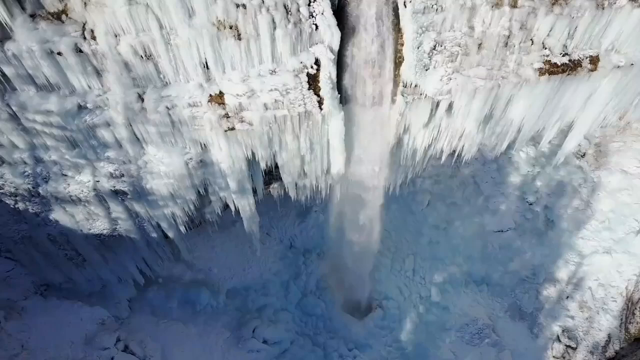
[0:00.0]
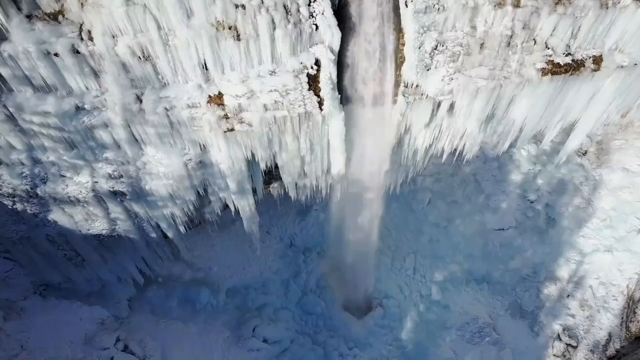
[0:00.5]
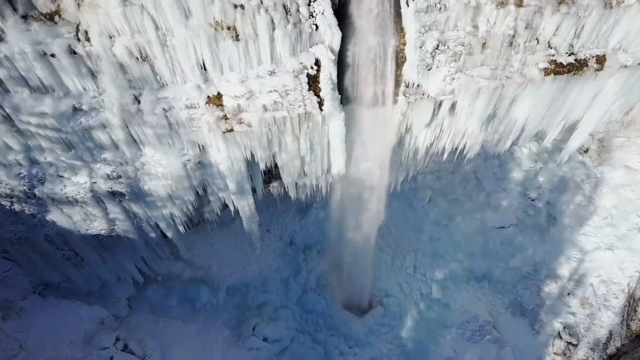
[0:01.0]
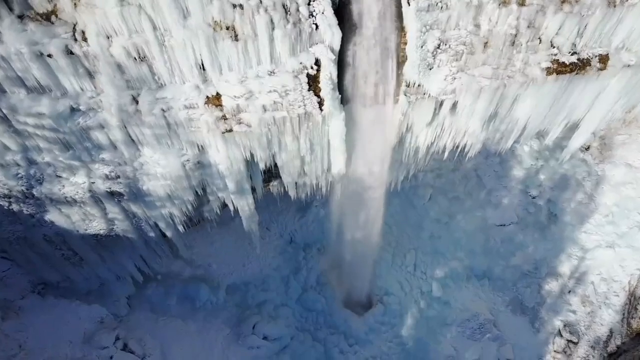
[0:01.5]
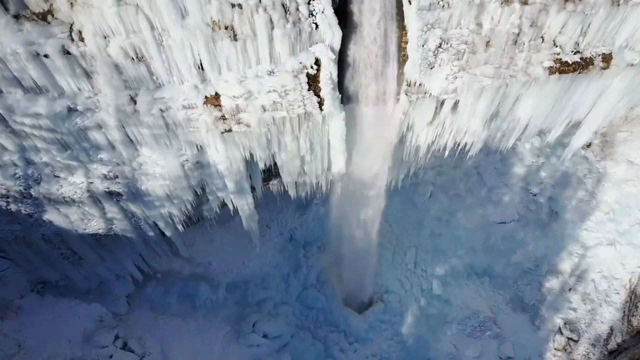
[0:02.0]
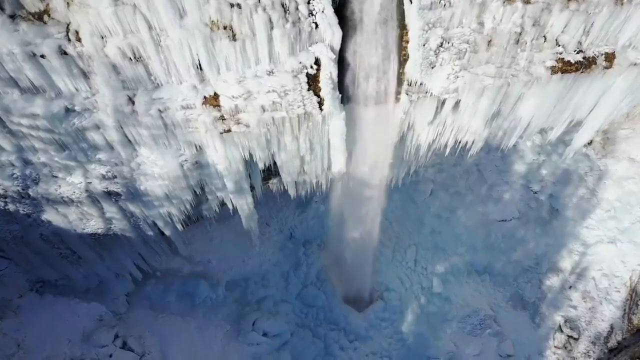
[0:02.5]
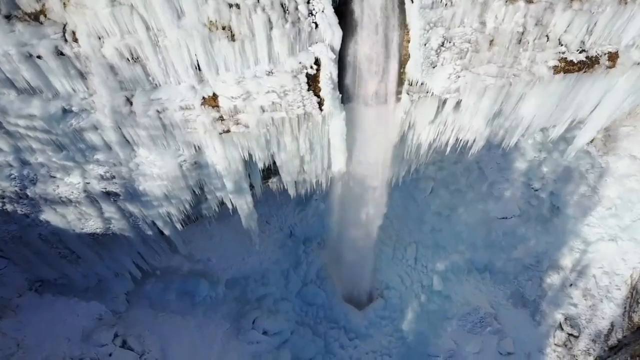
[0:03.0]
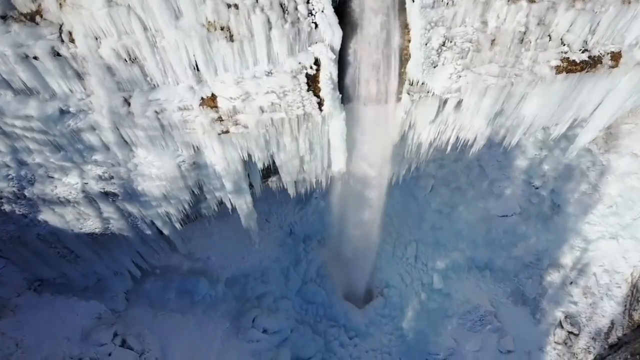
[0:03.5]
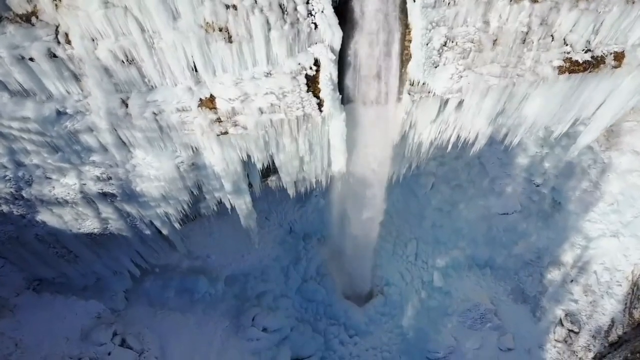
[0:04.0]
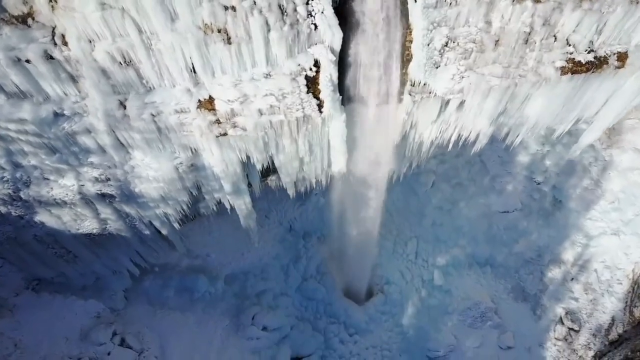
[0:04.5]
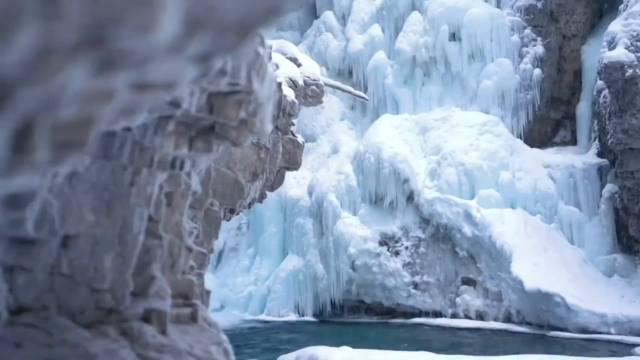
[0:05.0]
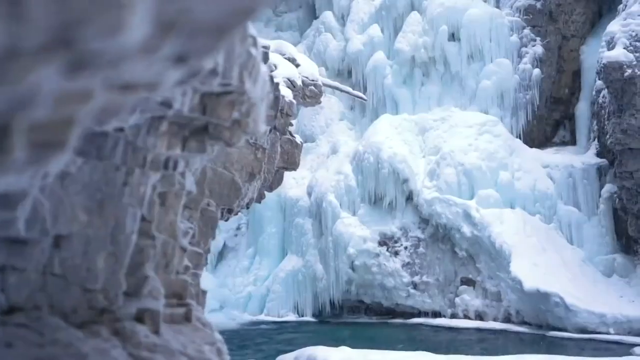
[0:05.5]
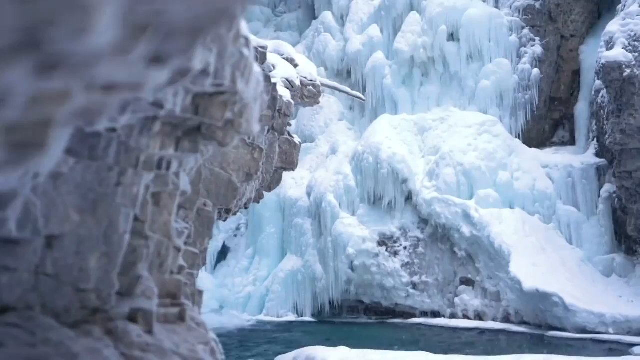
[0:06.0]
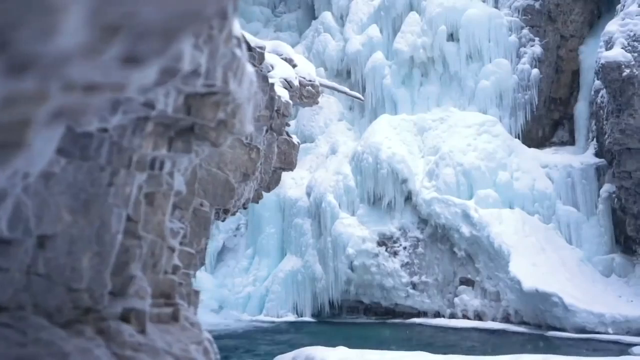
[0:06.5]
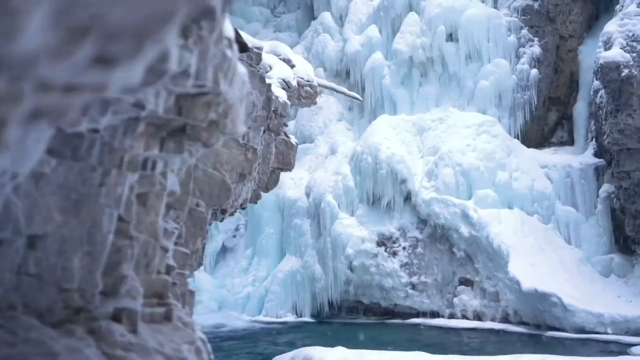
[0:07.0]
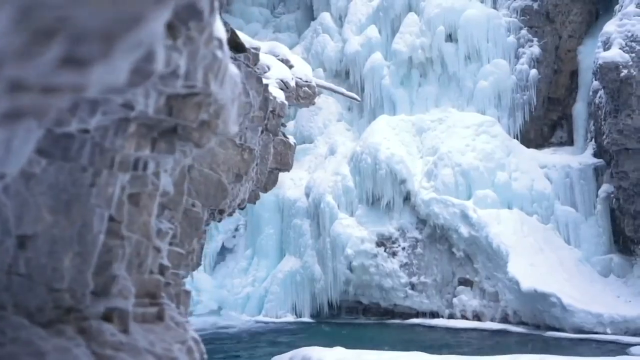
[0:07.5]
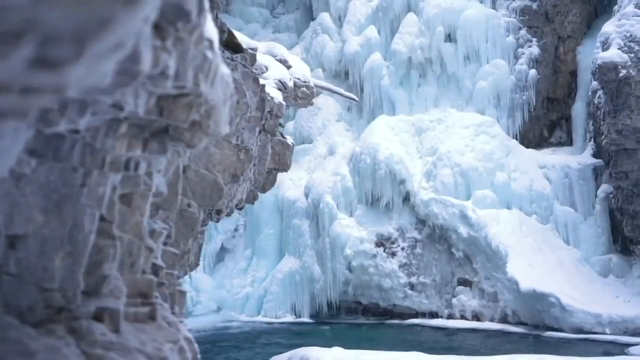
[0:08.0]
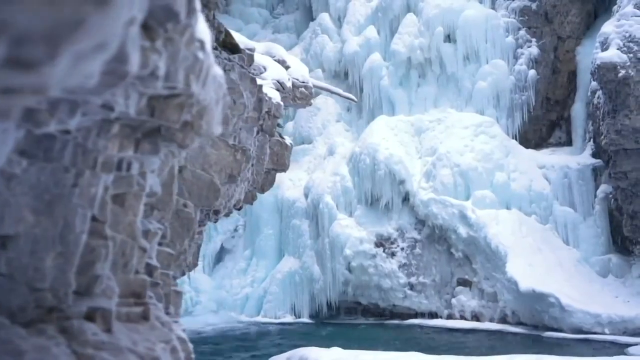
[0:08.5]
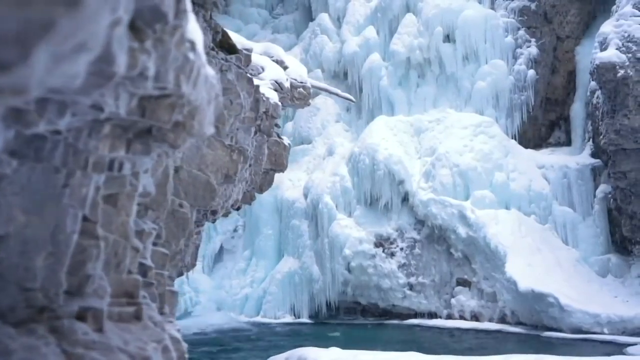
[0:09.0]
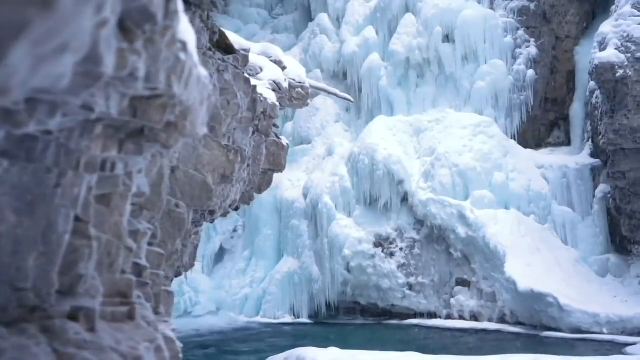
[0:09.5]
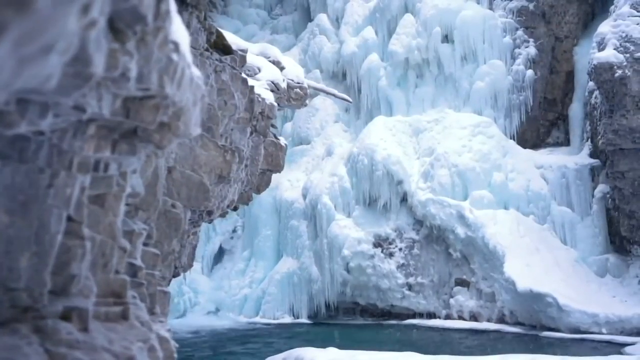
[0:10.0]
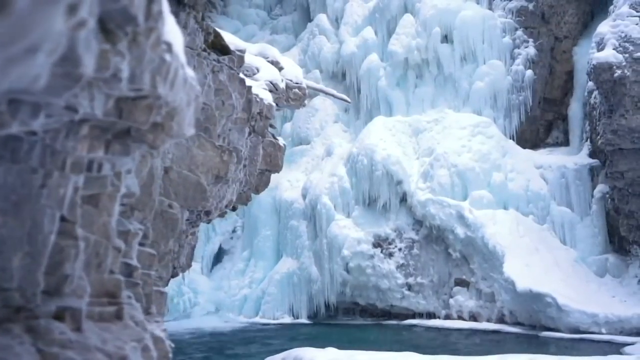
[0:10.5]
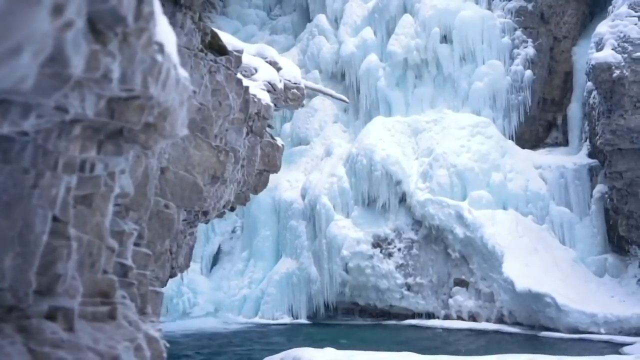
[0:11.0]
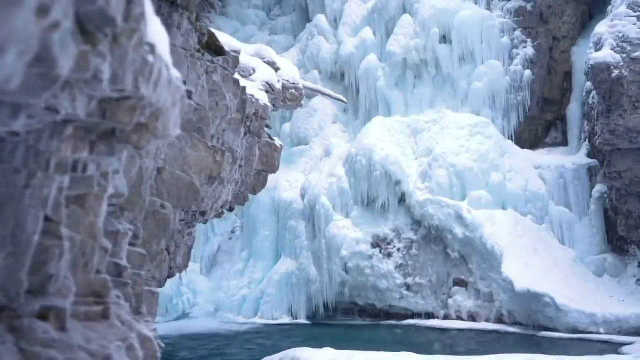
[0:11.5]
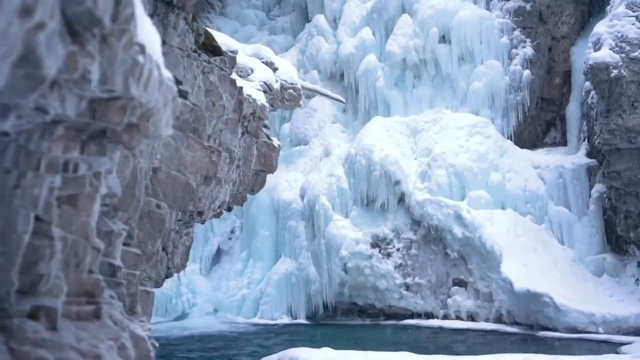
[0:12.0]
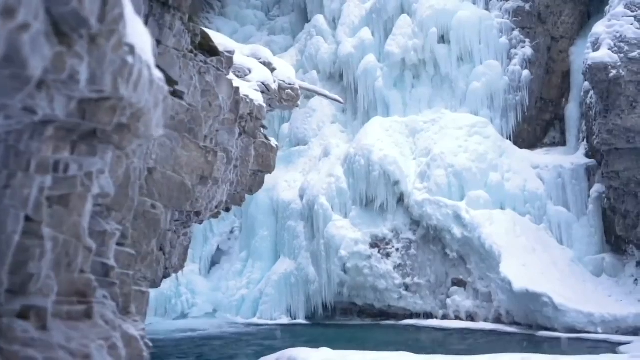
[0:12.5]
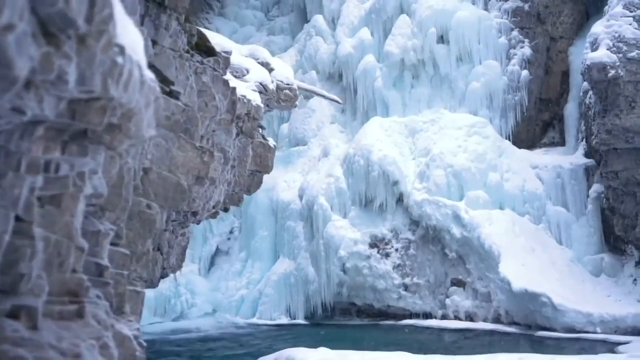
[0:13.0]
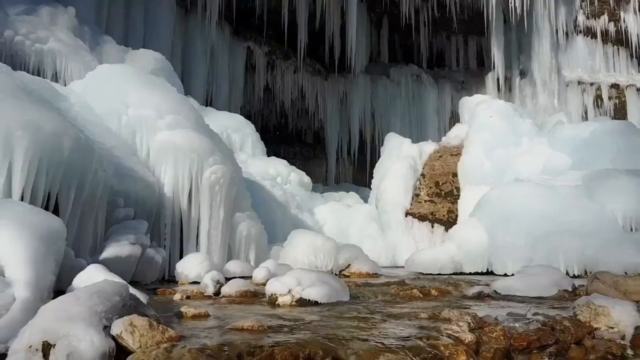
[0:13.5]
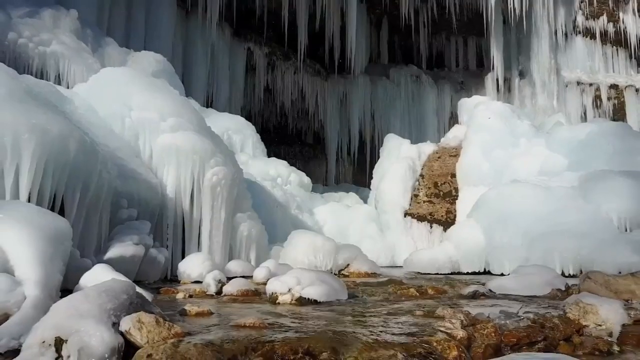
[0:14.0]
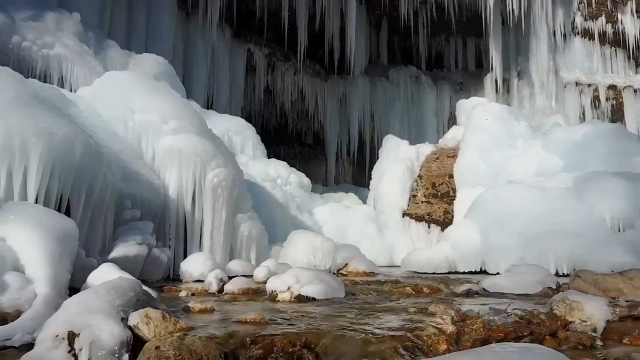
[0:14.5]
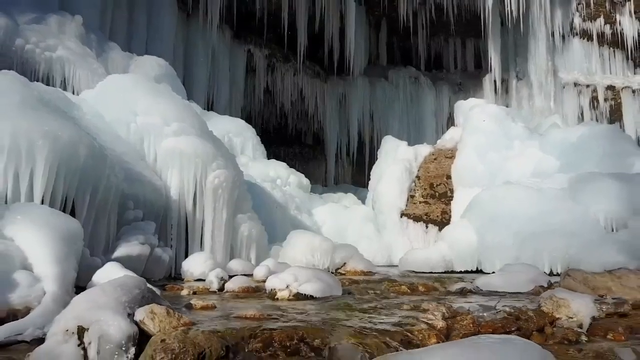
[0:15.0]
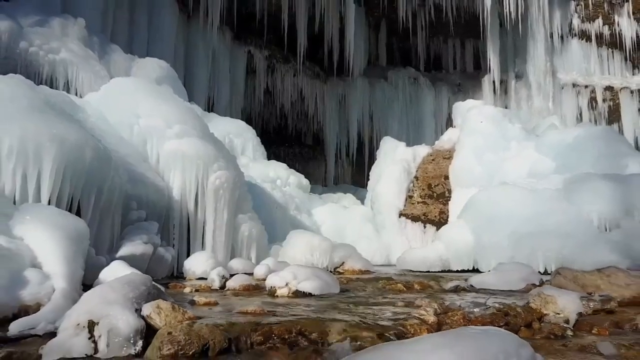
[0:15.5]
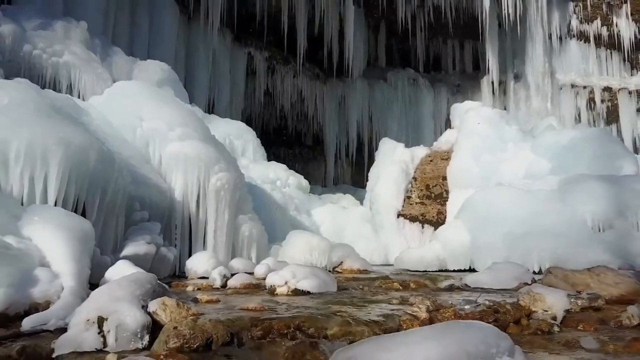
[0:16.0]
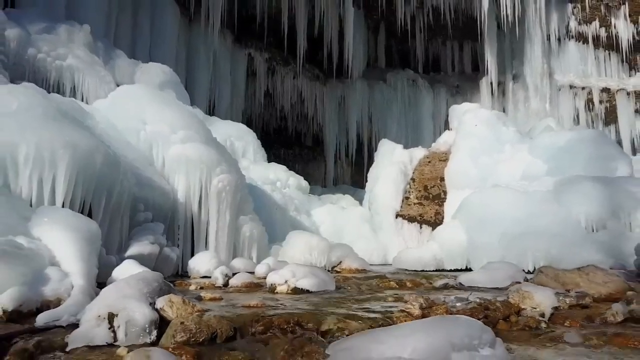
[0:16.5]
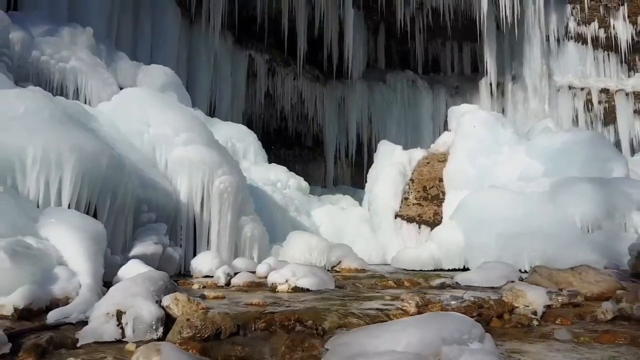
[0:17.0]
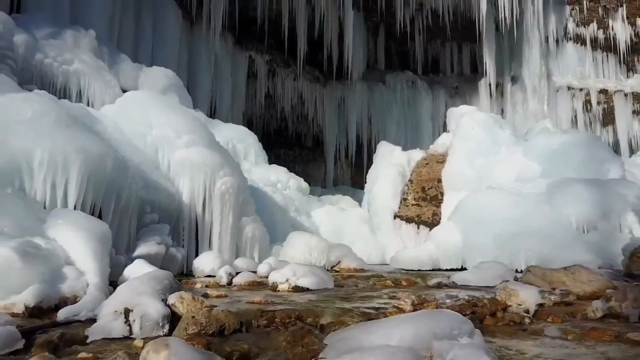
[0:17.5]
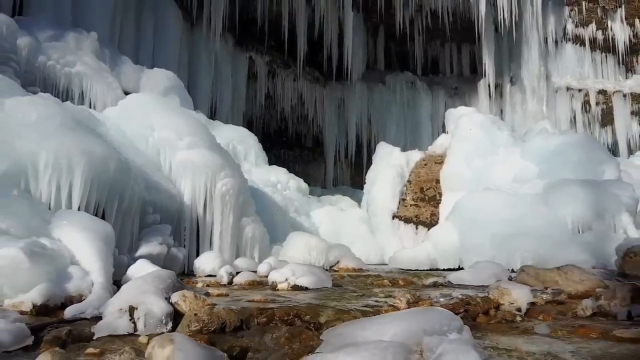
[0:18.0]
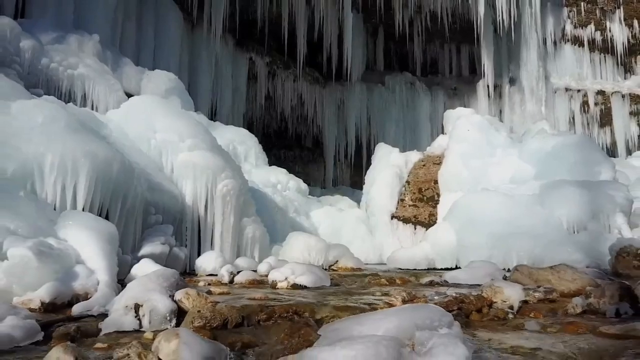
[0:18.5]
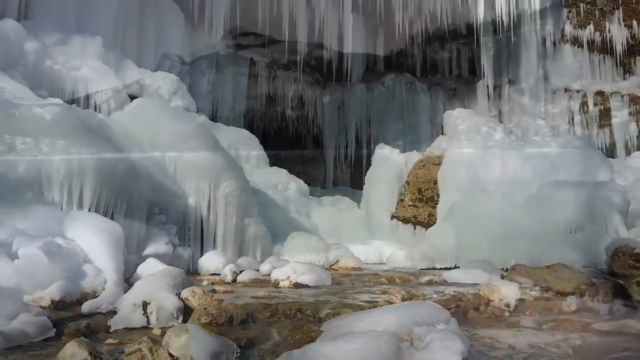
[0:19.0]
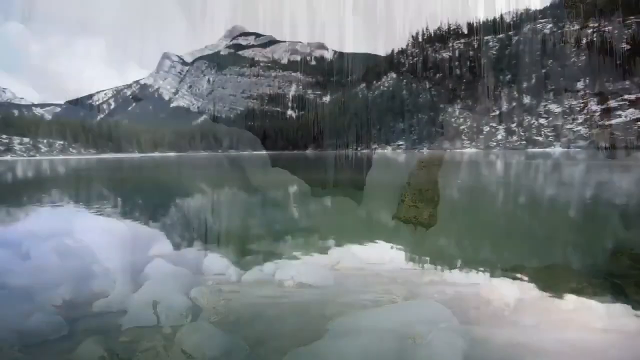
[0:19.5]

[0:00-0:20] The video opens on an icy mountain at the top. This mountain-like structure is a waterfall, and the mountain area is covered in ice. Down below, the waterfall flows into a hole on the icy surface, which has created a lake or a river made of ice. The top surface is blue, and the scene looks like a valley of icy mountains with drizzling snow or ice and some ice falling off the rocks. A flowing stream has small amounts of ice on it, with some ice forming pointy objects.